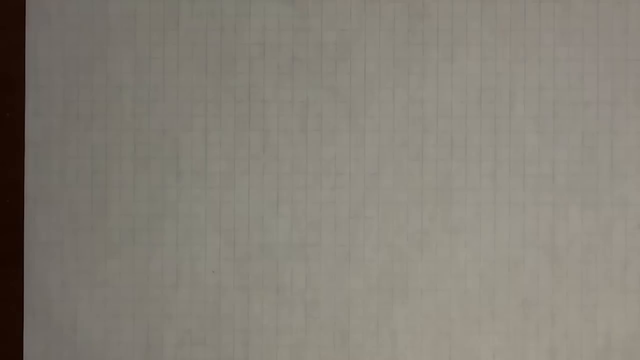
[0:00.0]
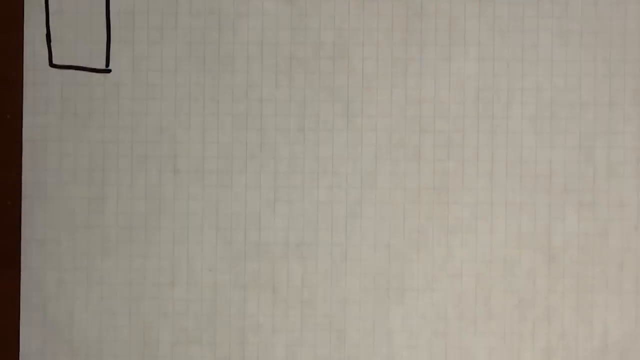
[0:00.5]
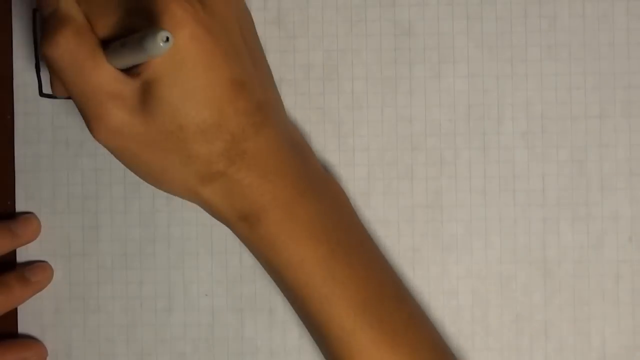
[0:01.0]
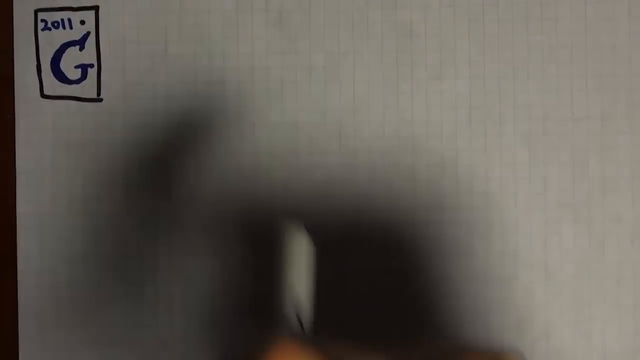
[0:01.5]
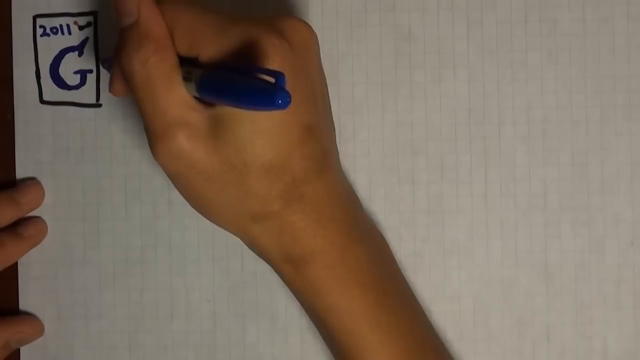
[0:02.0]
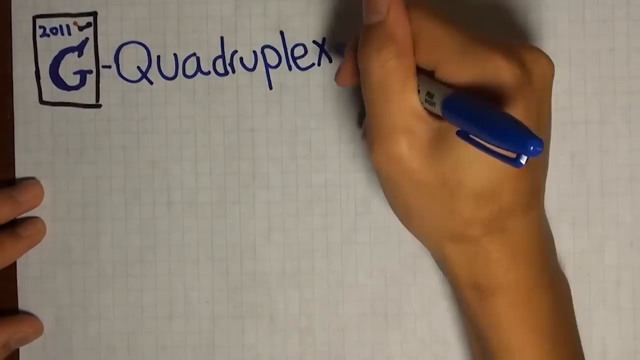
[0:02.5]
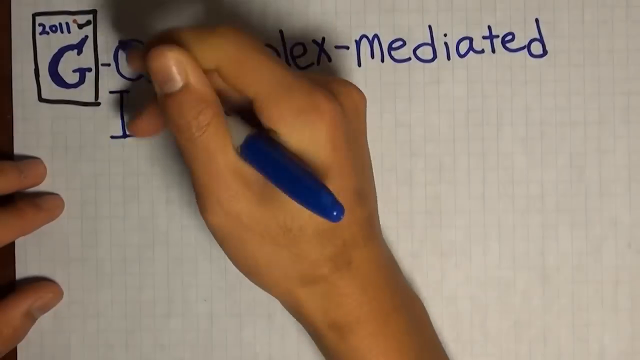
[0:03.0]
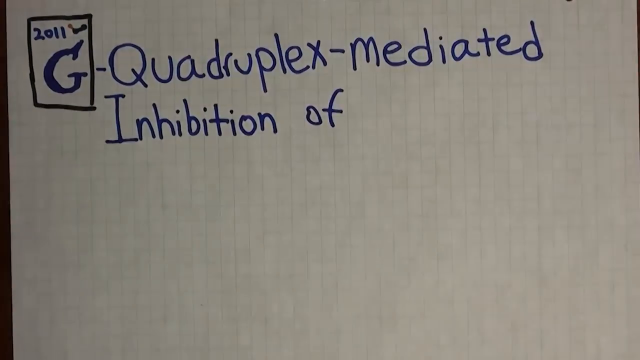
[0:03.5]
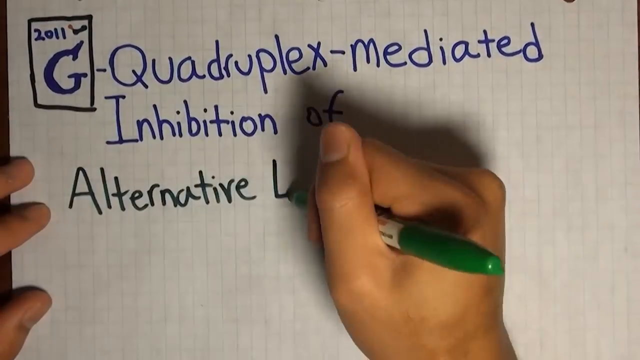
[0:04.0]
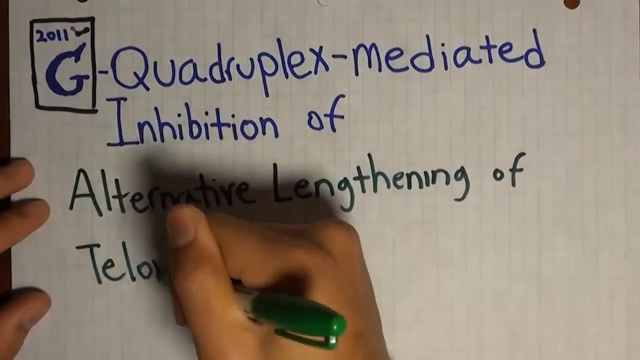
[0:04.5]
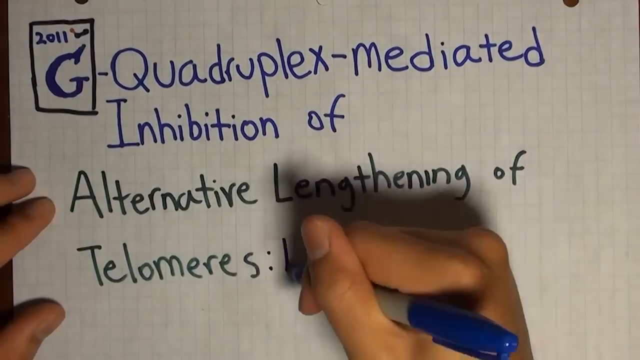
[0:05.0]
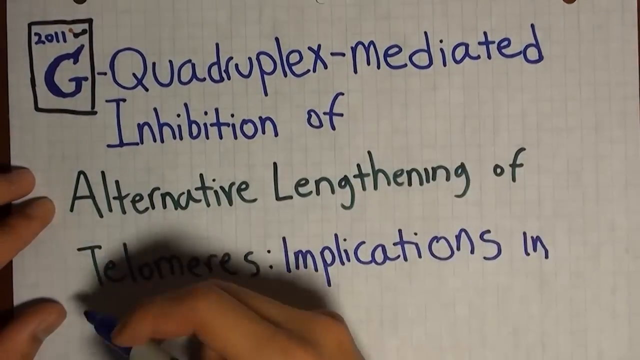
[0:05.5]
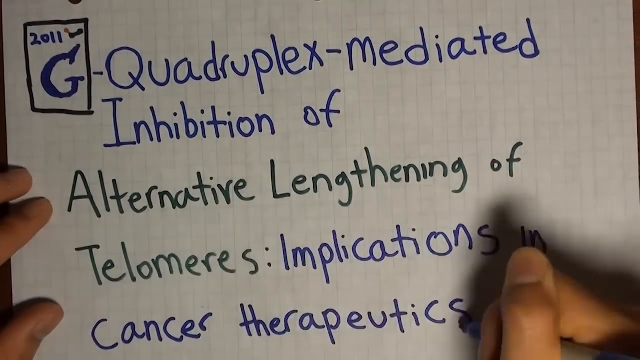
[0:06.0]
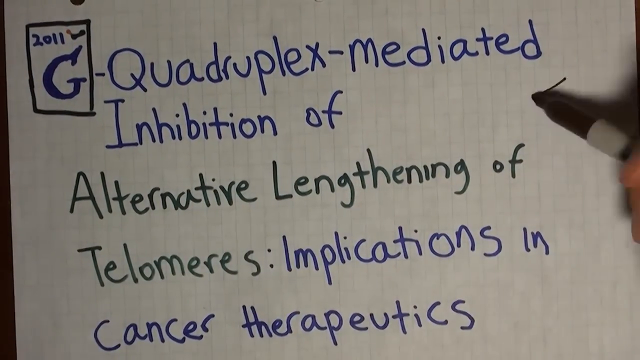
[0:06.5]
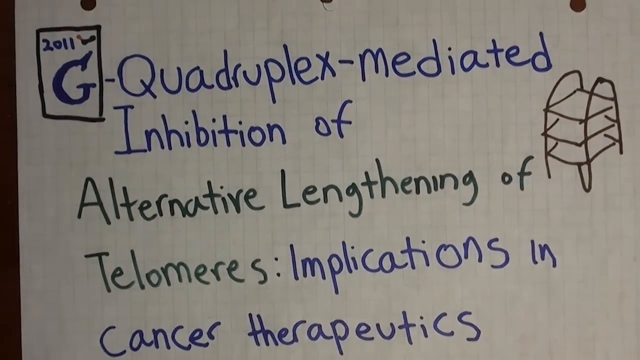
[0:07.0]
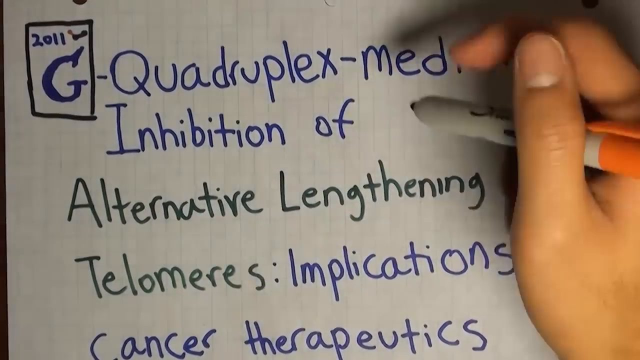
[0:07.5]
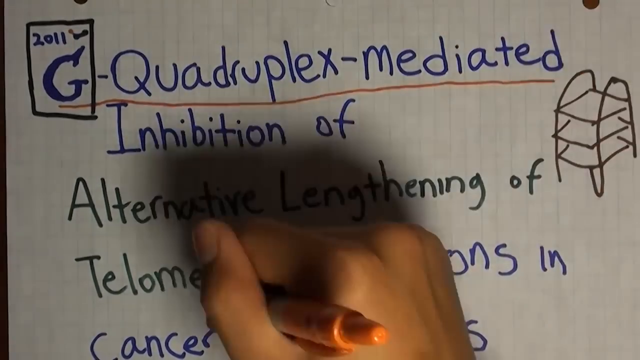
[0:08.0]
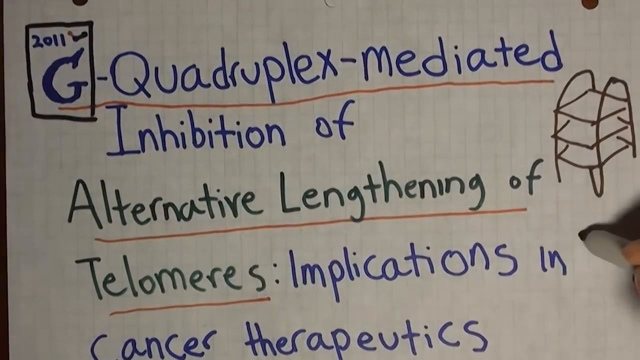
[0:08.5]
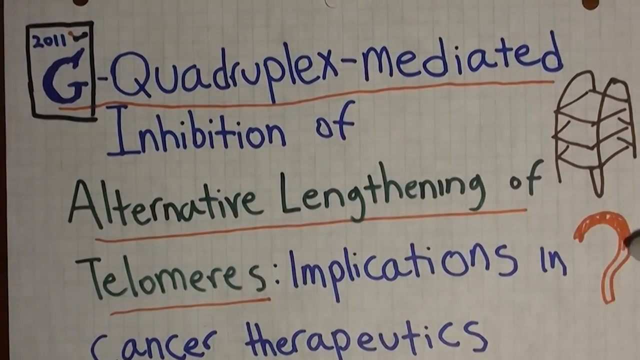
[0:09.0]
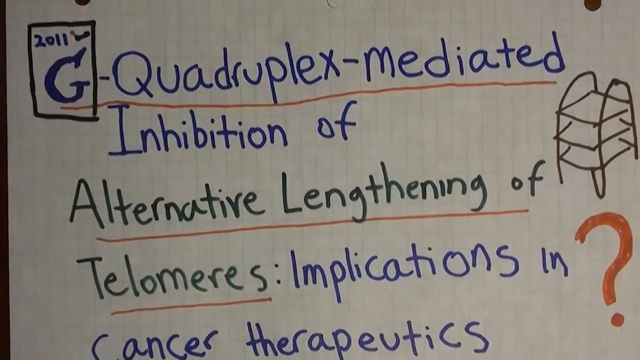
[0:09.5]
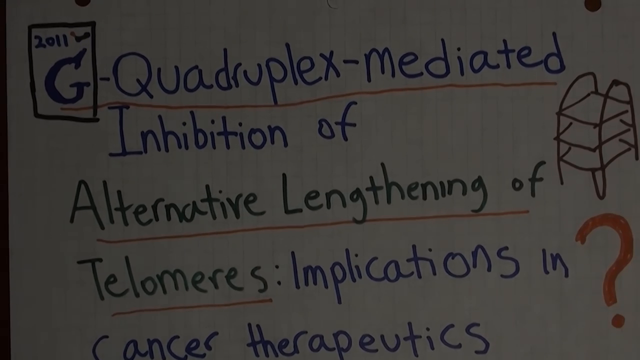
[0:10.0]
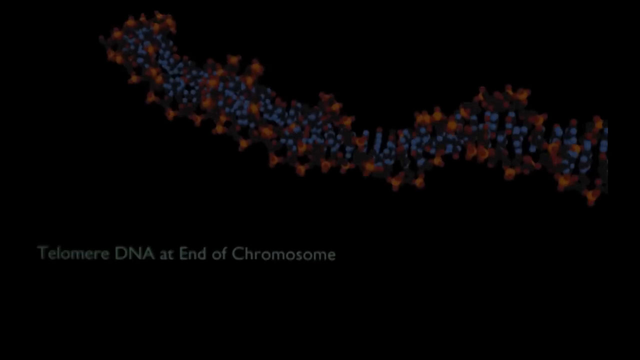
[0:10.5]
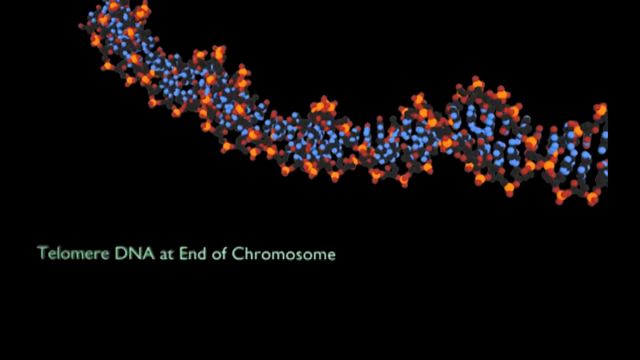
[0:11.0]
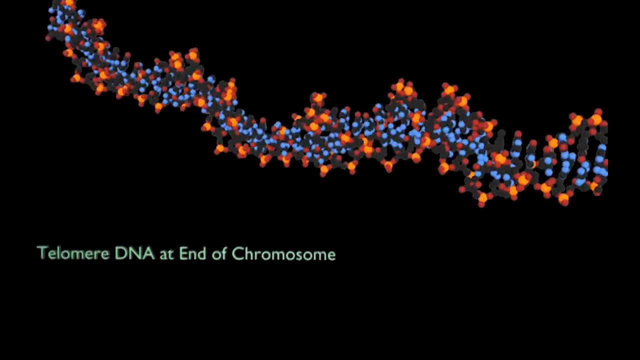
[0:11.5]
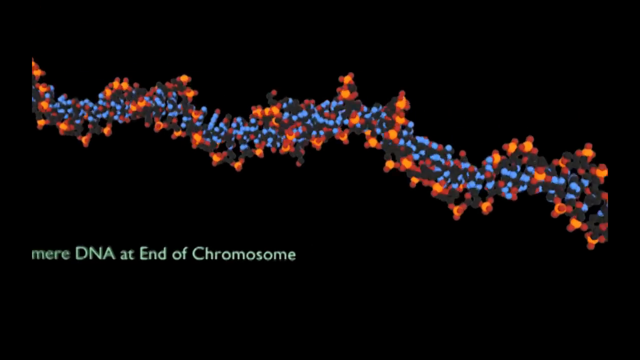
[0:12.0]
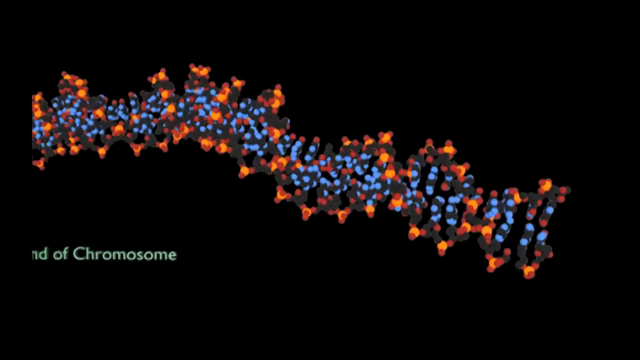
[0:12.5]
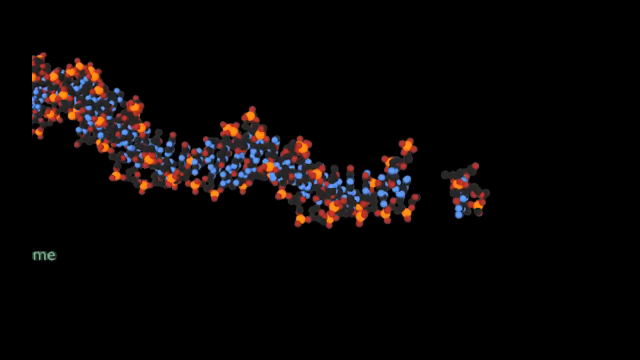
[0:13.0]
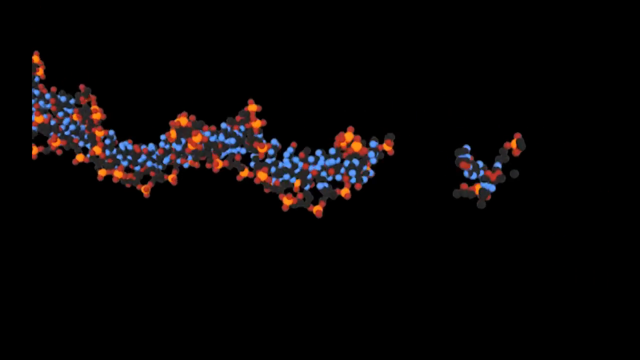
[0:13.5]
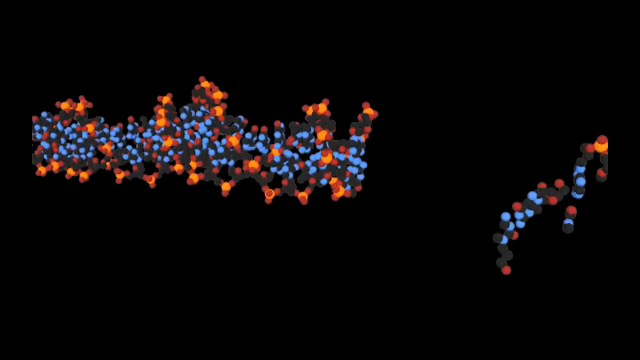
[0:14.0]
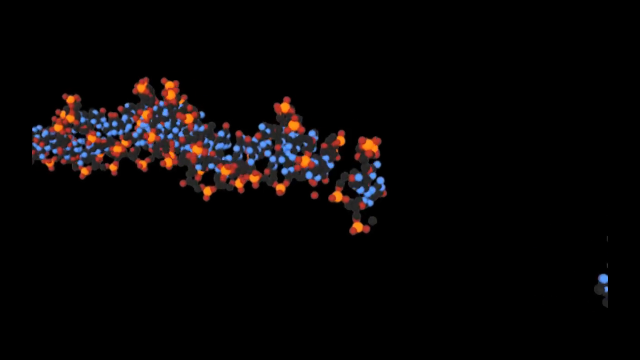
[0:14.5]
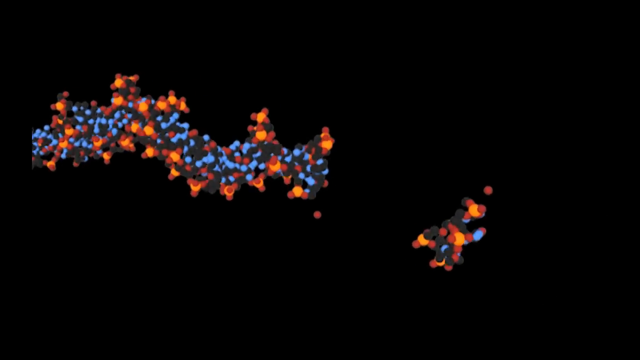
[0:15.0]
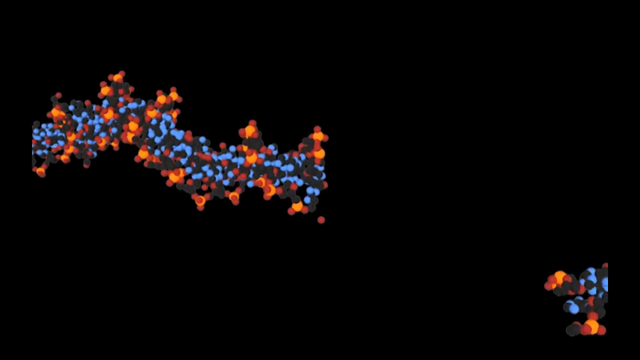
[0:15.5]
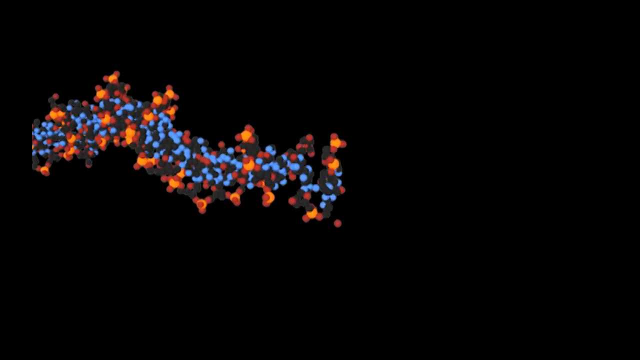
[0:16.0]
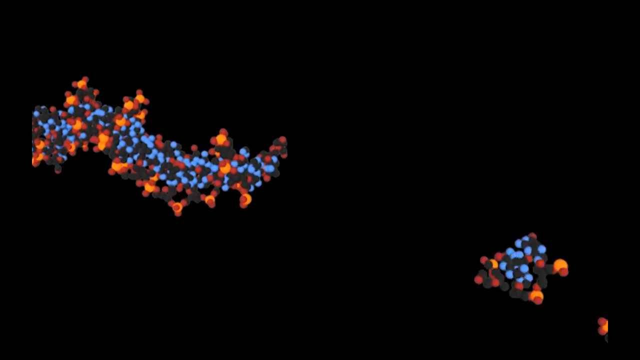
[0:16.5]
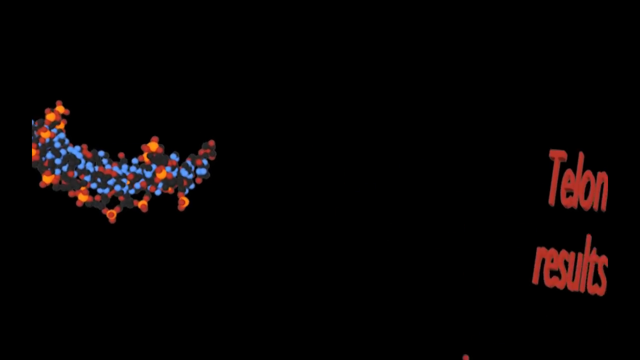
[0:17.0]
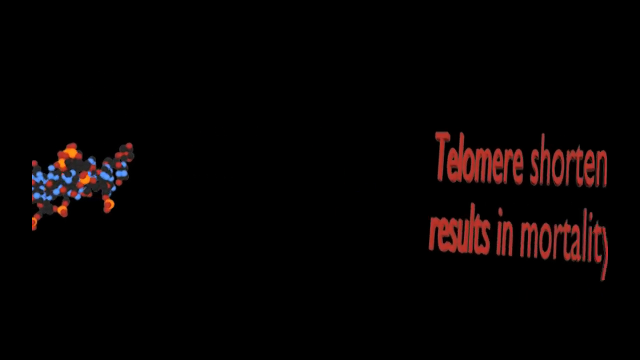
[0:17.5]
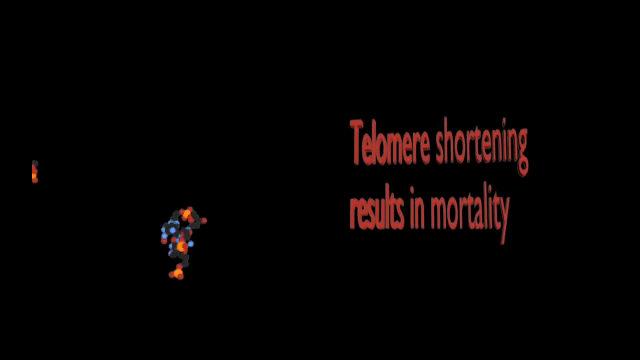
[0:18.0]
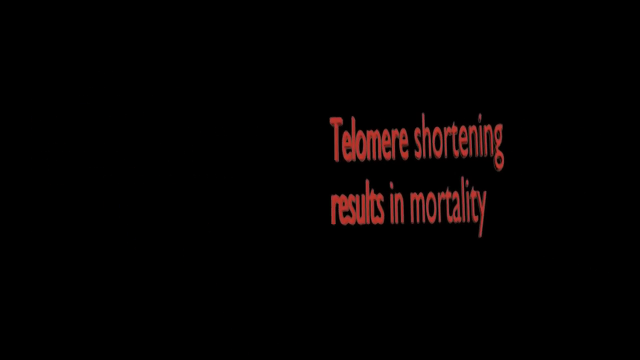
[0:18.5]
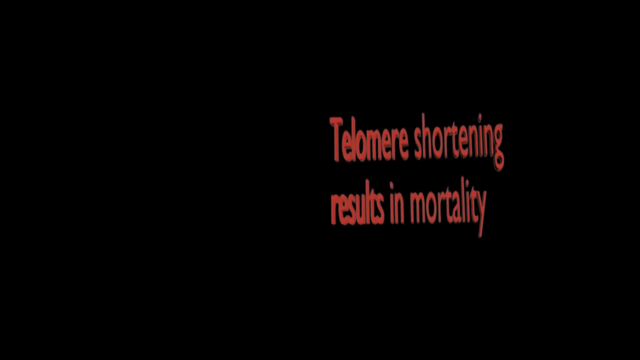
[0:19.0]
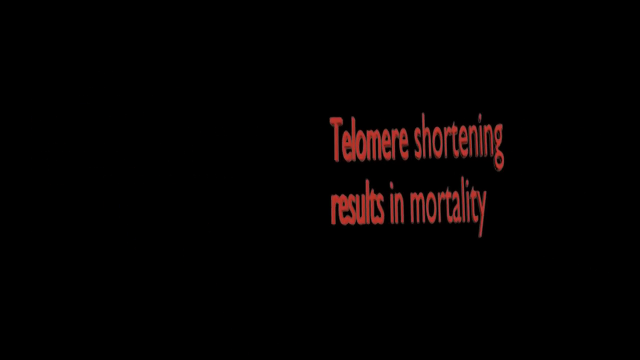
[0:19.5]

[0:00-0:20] A person is drawing. On screen is "2011" and a title that includes "quadruplex medicated inhibition of alternative lengthening of telomerase implications in cancer therapeutics." Next comes the telomere DNA at the end of a chromosome, and a strand of the chromosome breaks apart piece by piece from right to left. Then the text "telomere shortening results in mortality" appears.